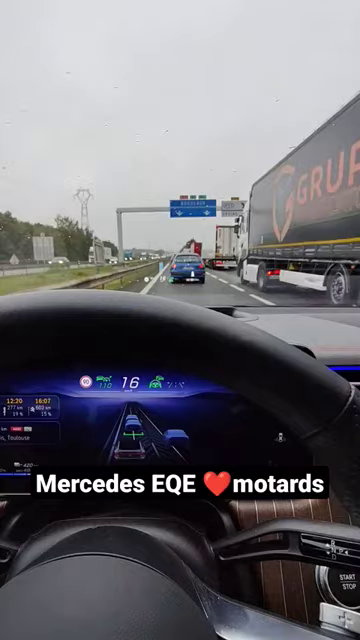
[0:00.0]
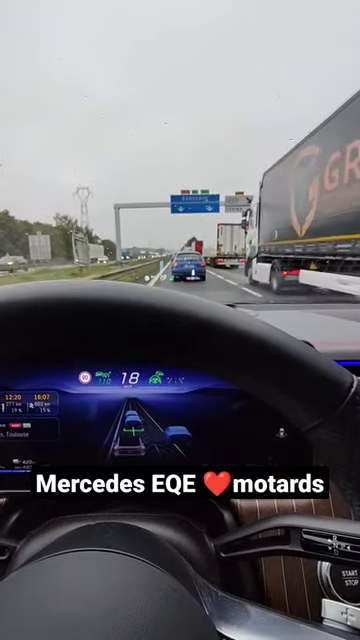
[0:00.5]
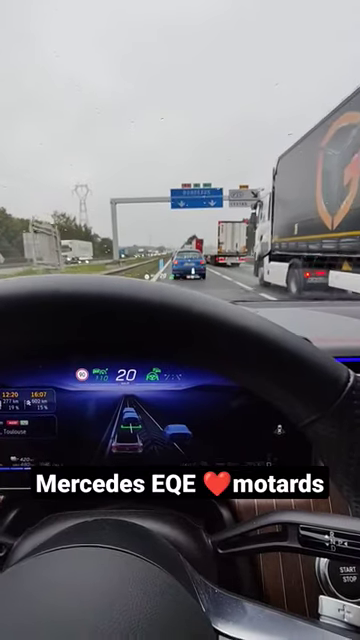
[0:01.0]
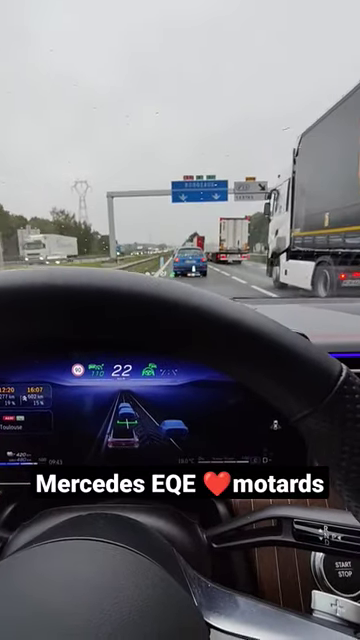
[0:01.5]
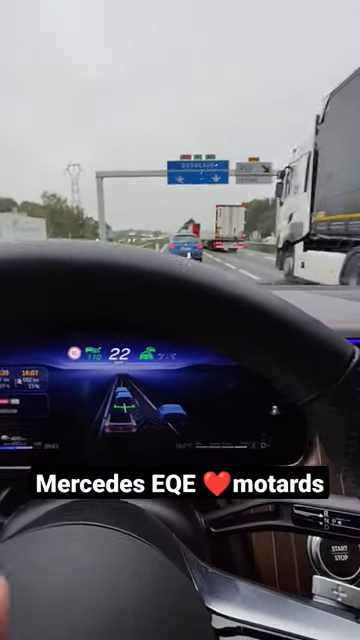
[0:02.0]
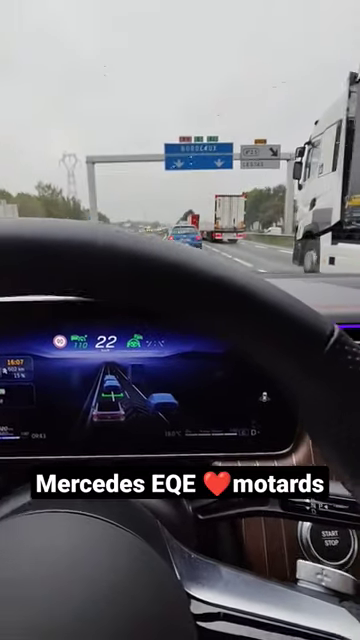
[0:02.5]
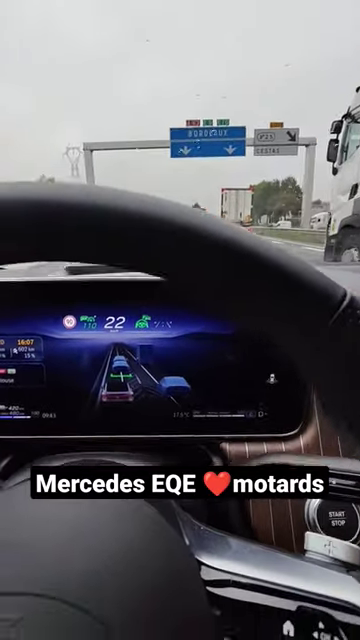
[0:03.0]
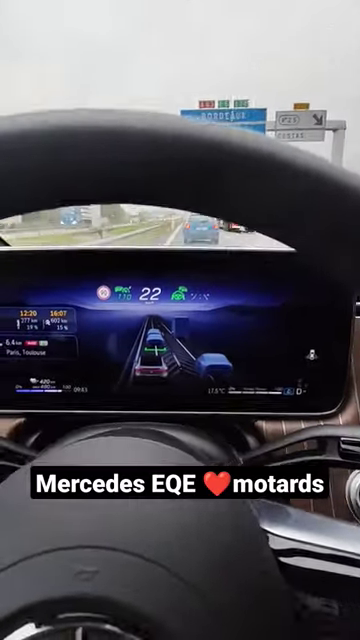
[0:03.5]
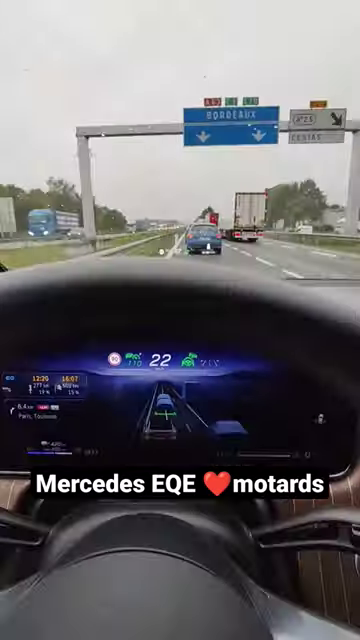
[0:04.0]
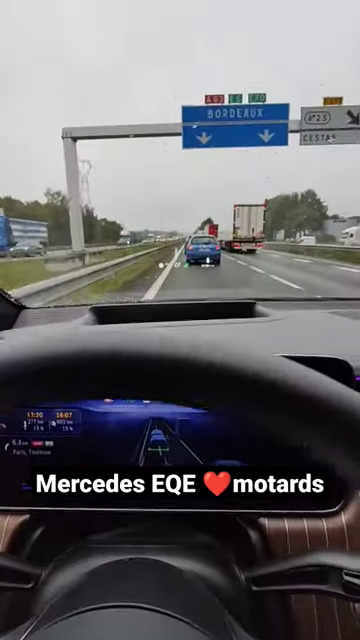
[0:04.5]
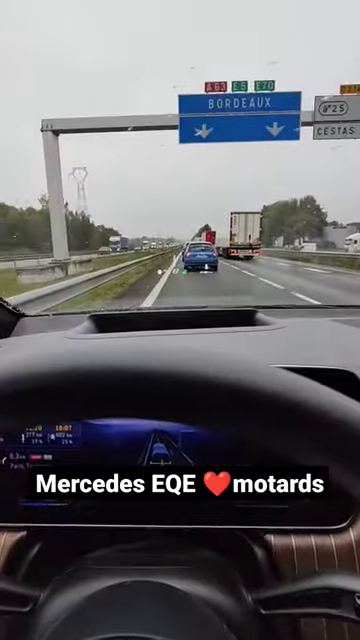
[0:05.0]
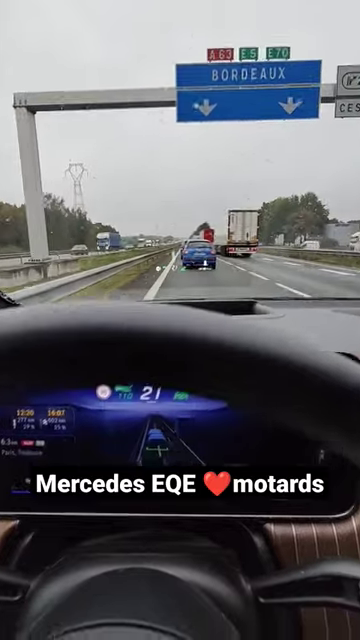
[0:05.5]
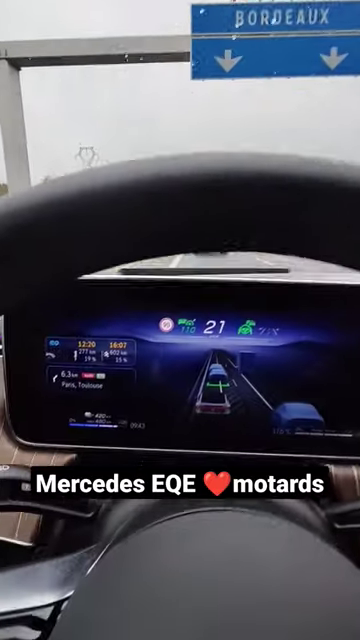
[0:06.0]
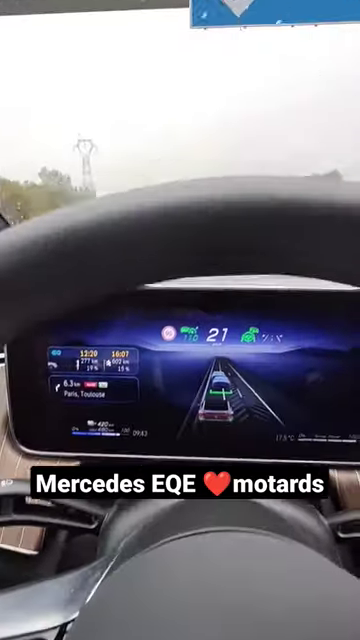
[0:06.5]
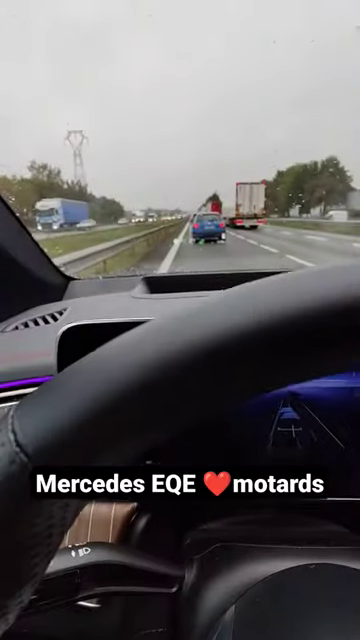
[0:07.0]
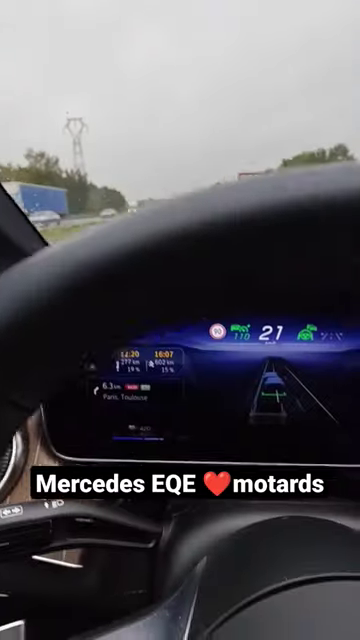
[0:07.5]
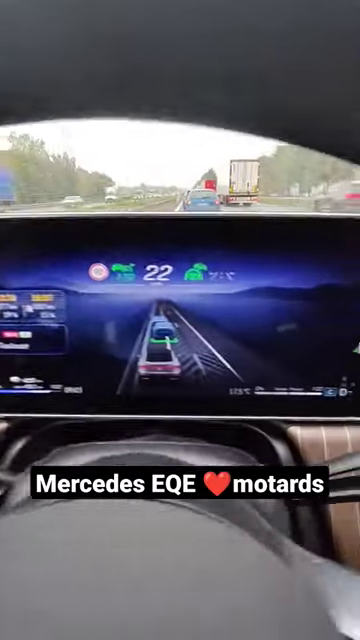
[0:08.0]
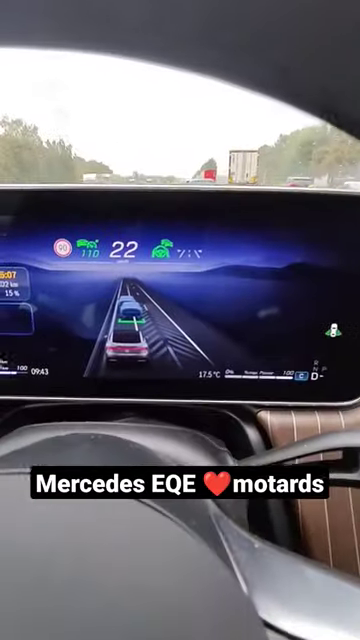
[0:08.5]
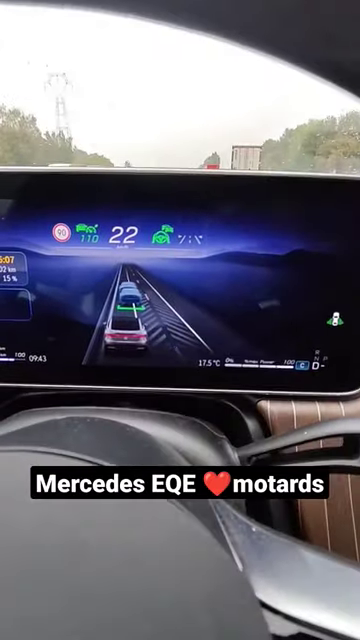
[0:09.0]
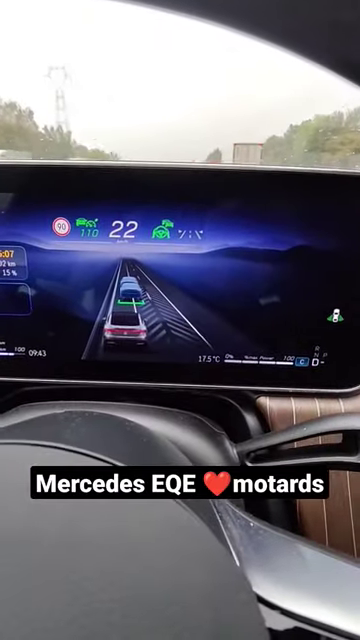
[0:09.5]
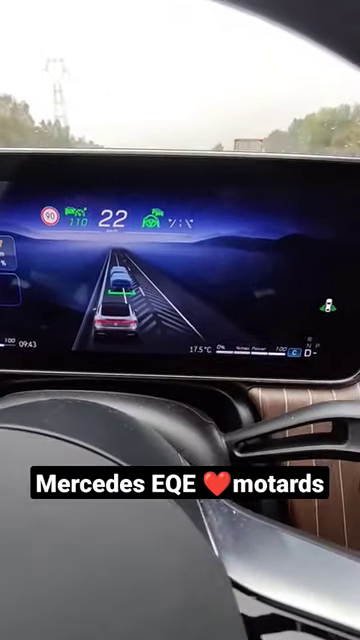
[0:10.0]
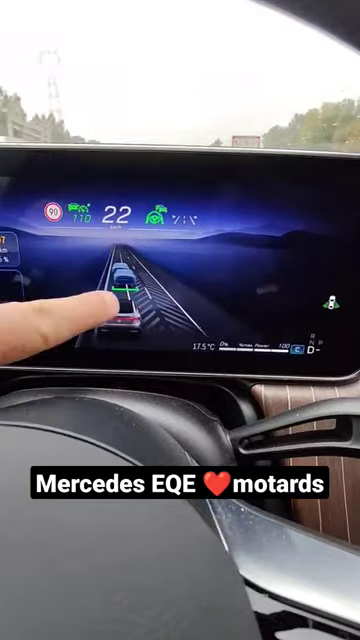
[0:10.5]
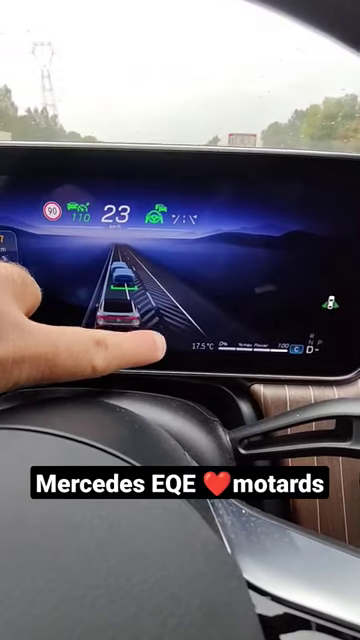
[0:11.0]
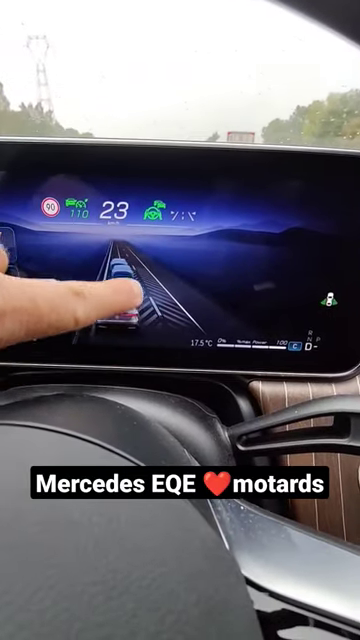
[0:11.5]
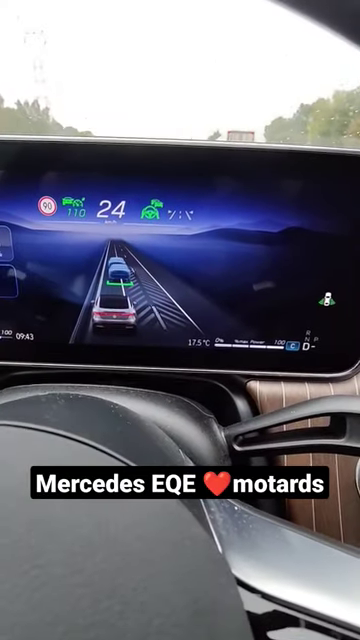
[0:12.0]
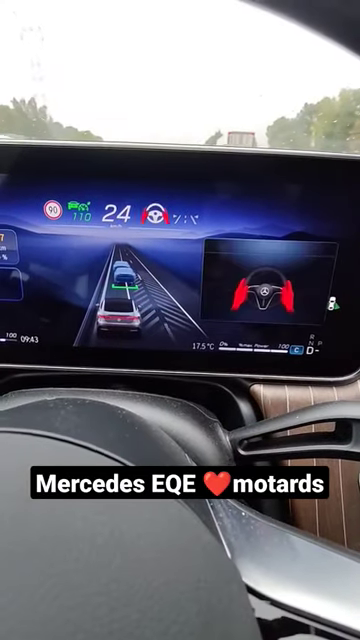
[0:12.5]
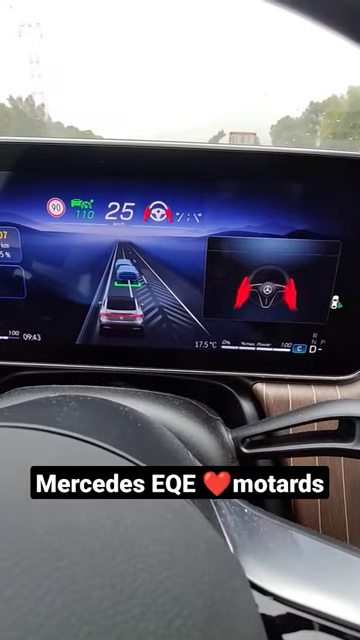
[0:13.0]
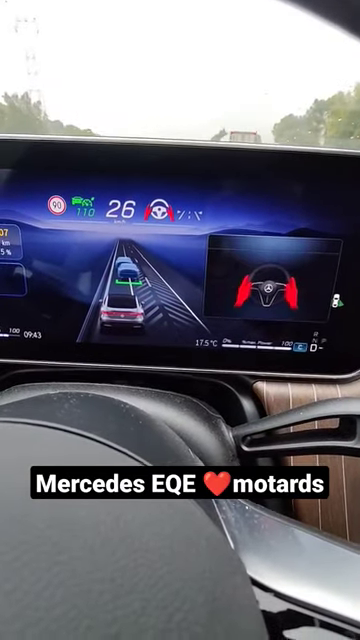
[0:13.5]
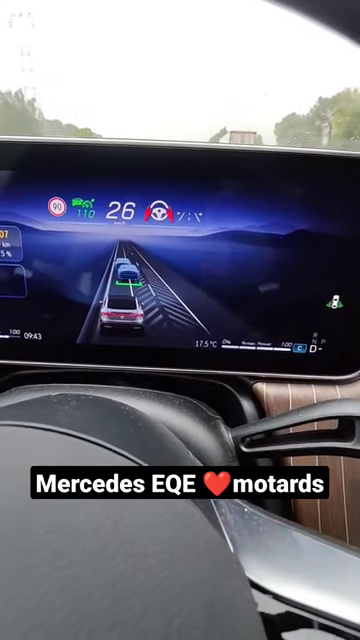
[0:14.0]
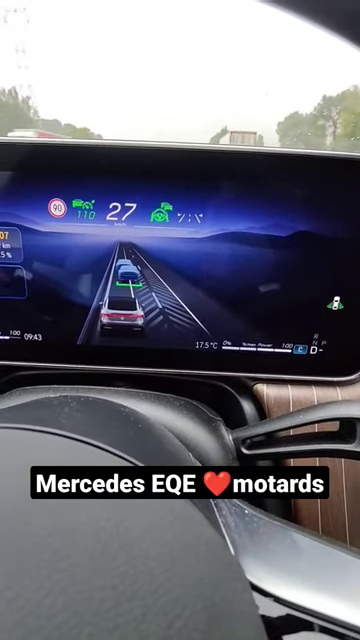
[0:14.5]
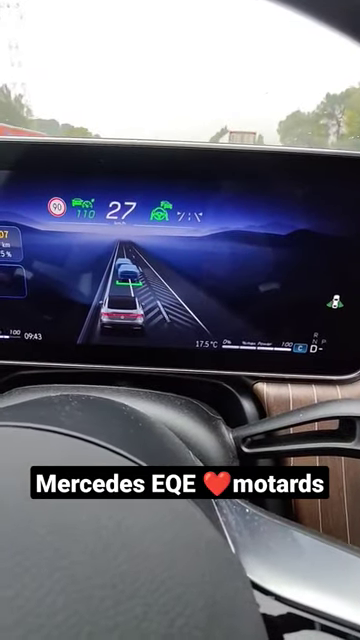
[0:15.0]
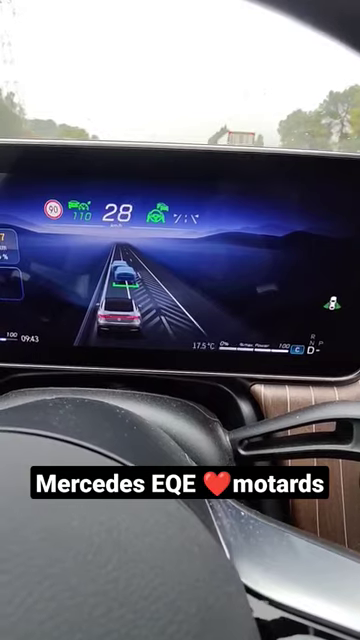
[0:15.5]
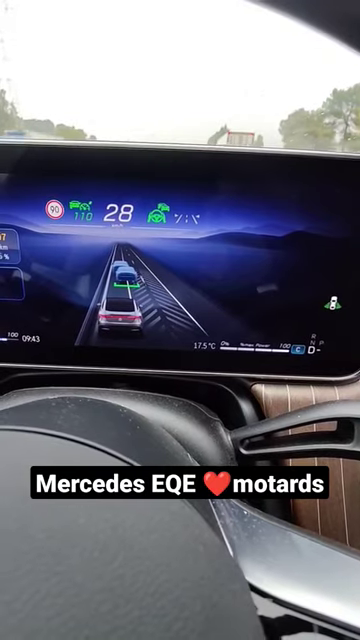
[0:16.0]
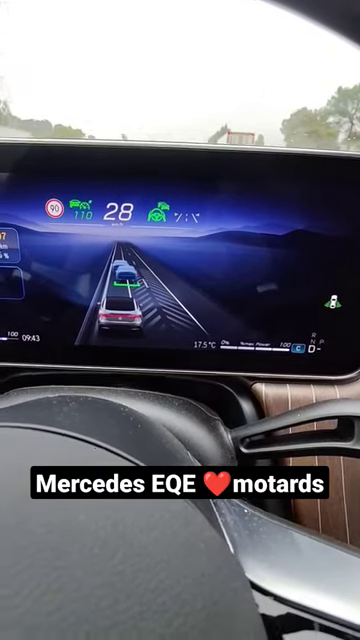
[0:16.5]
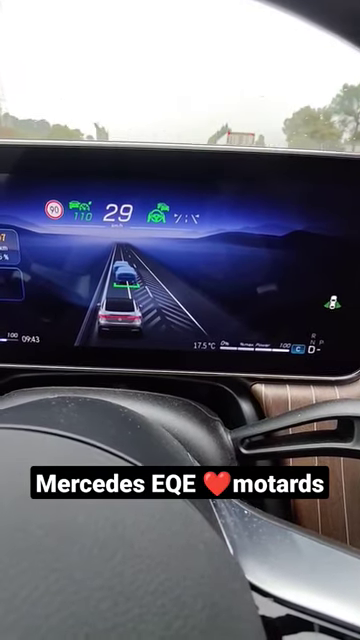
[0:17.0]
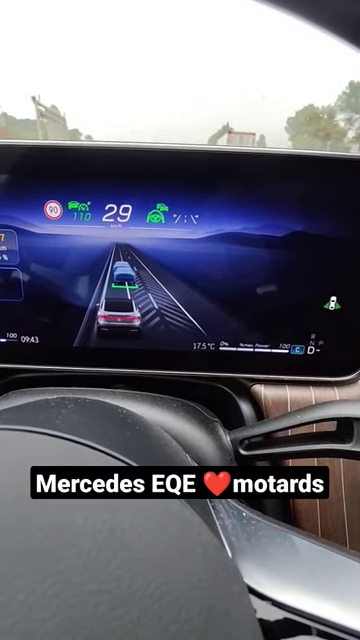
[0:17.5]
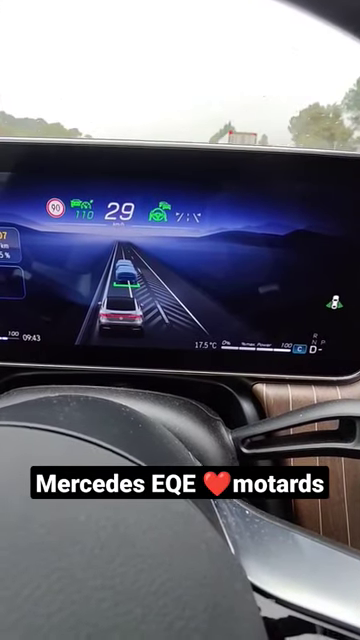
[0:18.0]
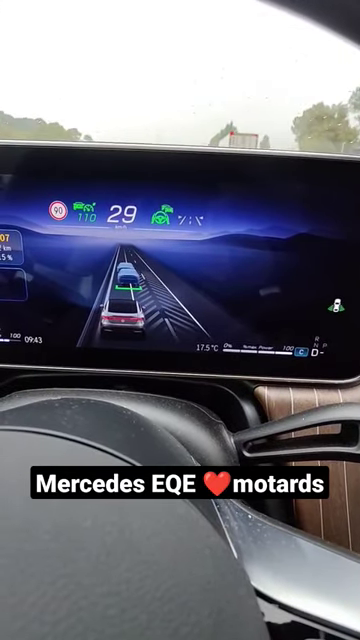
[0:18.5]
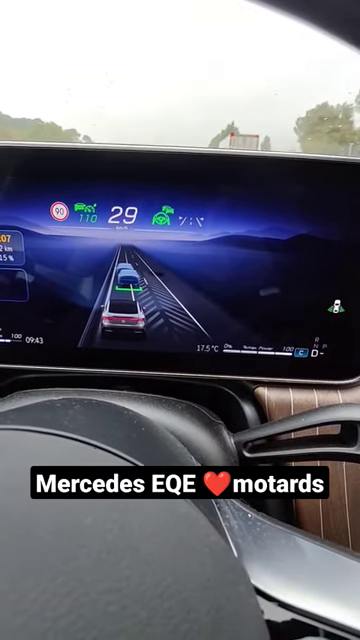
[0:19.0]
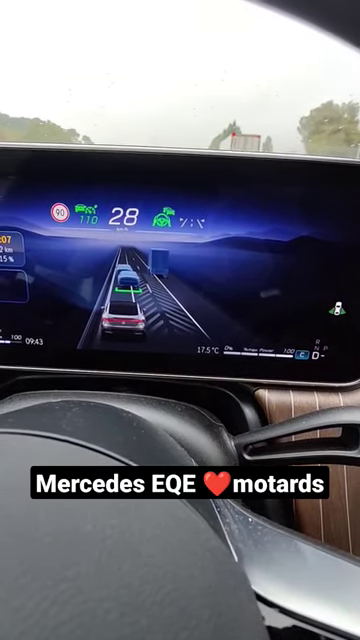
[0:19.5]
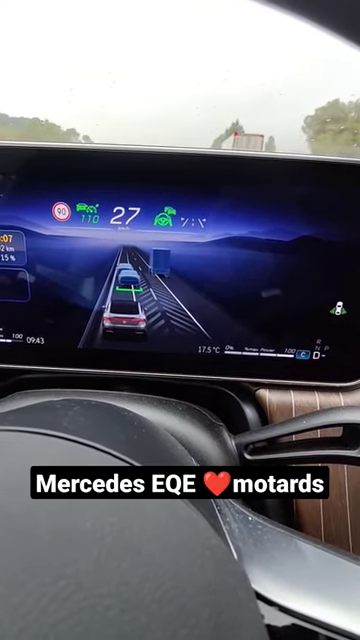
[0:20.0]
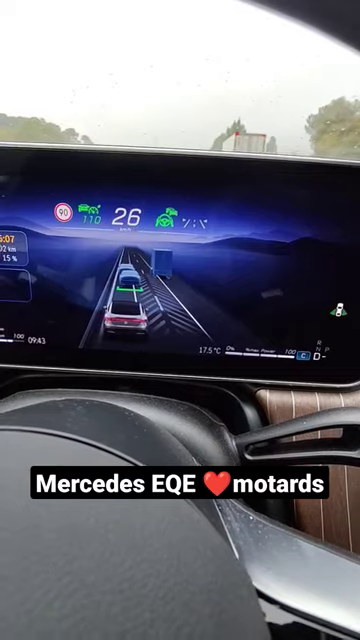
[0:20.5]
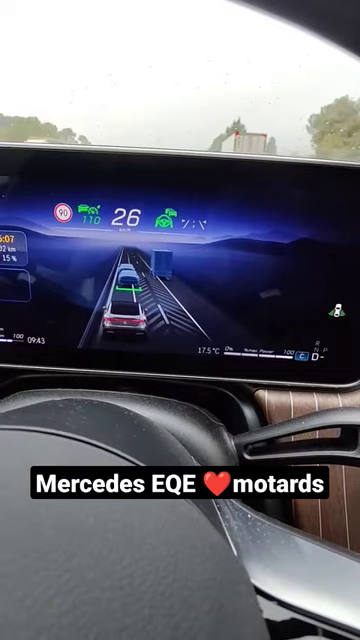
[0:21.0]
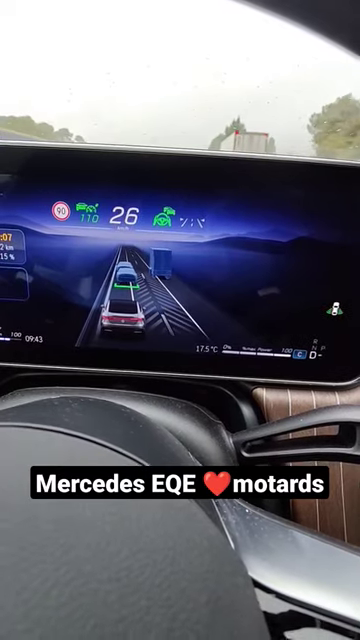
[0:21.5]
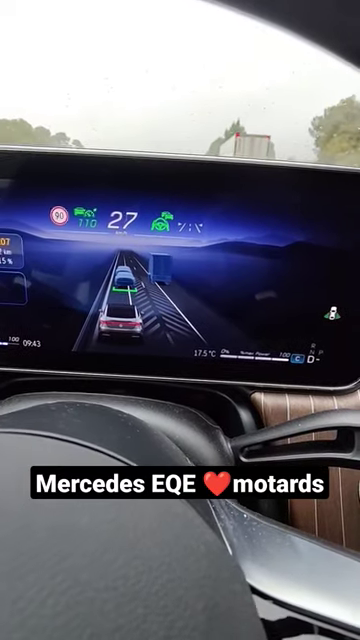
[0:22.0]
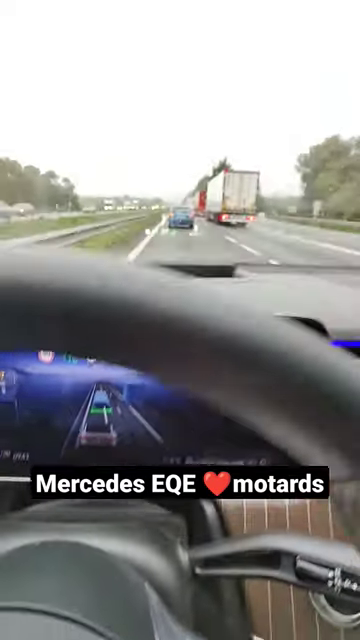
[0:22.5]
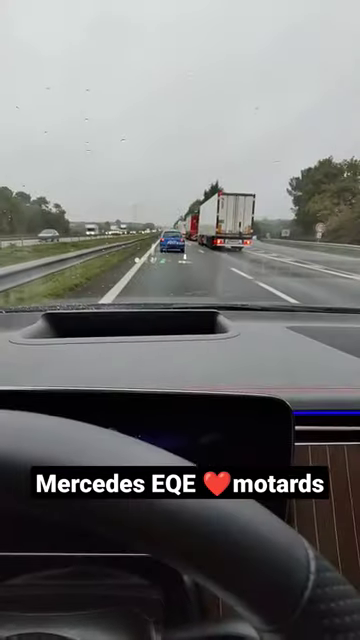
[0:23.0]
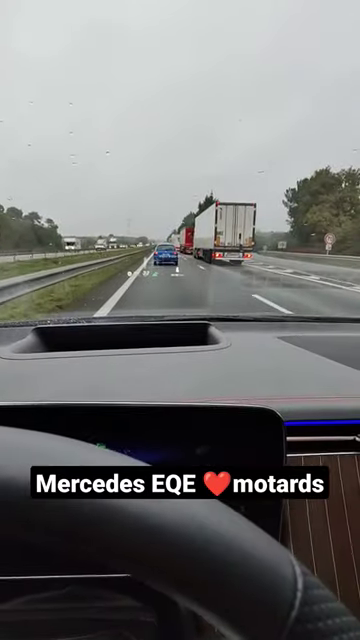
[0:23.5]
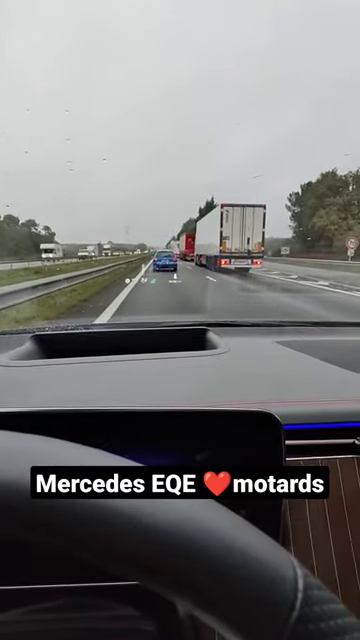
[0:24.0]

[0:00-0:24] The video appears to be in a different language, possibly French. It is about Mercedes: a person drives a Mercedes, and the high-tech dashboard is shown, looking almost 2D or 3D. The dashboard displays the road in full color as the driver navigates through traffic, showing the cars on the road in view, giving another look at the road ahead and apparently to the side. The video is advertising this feature in the Mercedes.